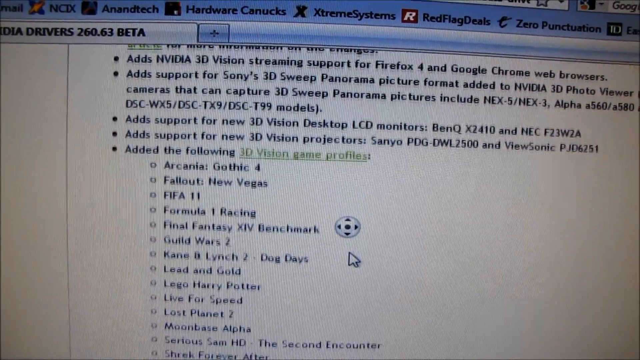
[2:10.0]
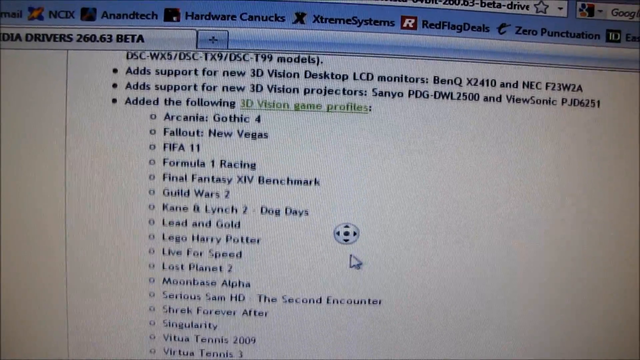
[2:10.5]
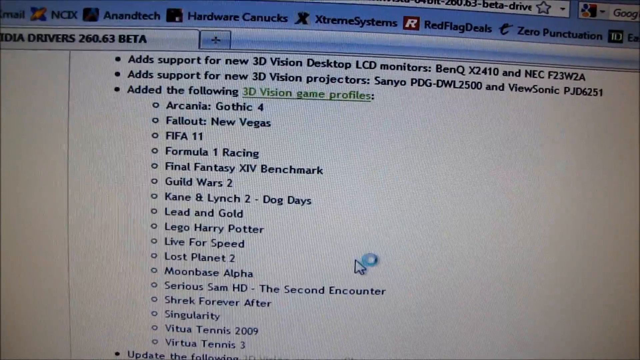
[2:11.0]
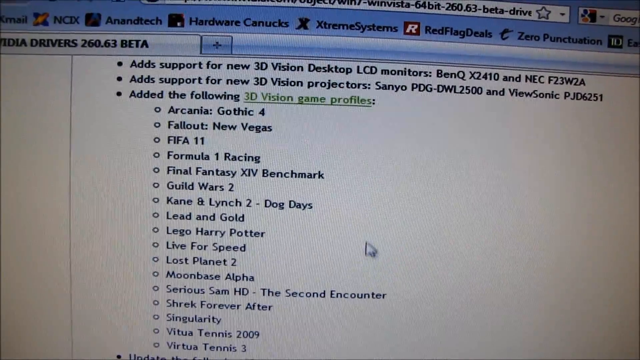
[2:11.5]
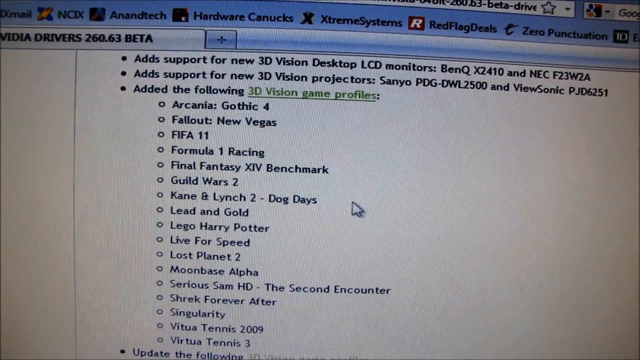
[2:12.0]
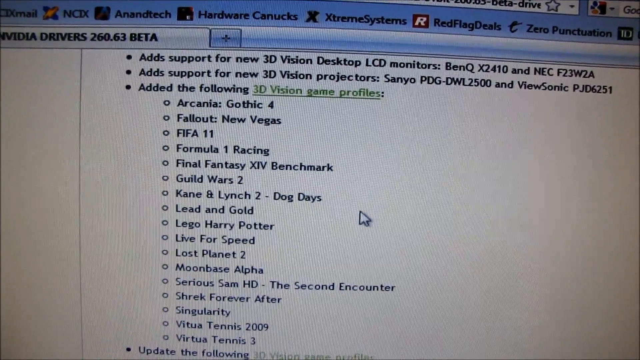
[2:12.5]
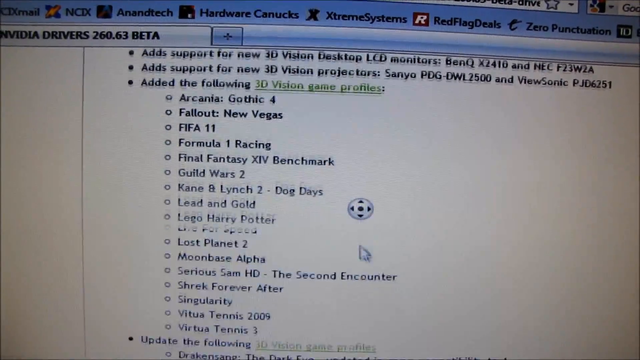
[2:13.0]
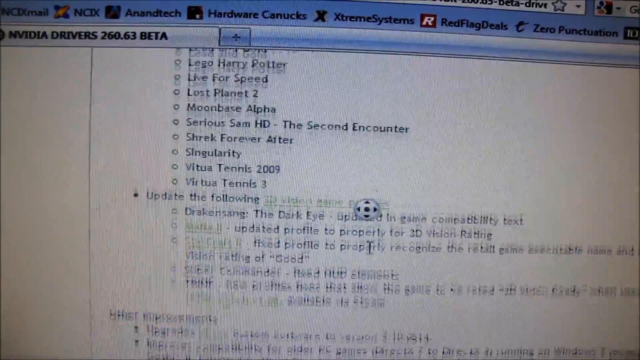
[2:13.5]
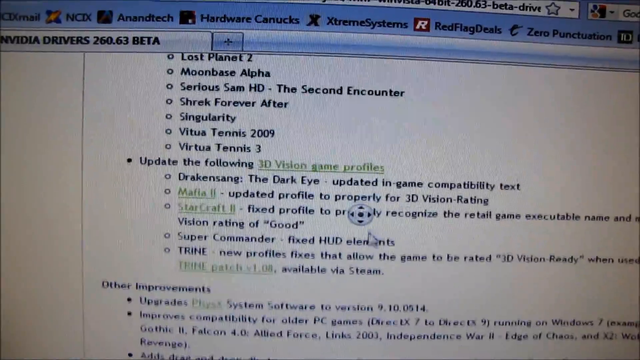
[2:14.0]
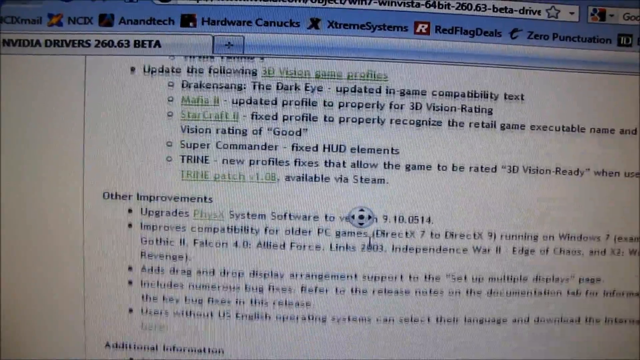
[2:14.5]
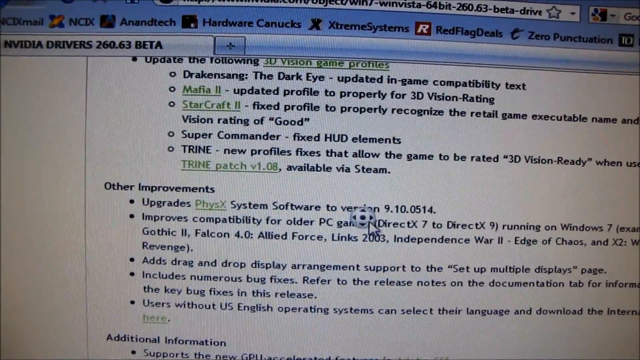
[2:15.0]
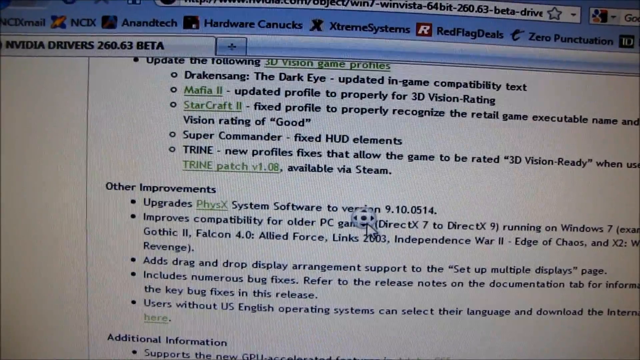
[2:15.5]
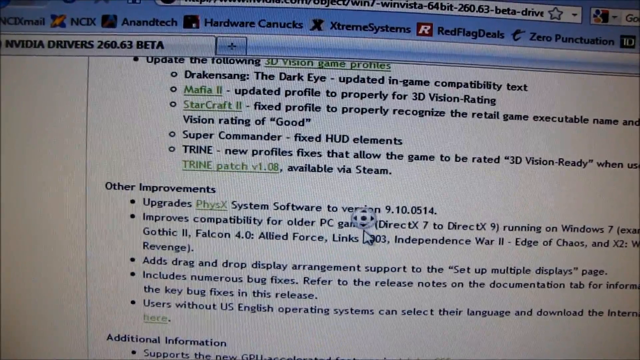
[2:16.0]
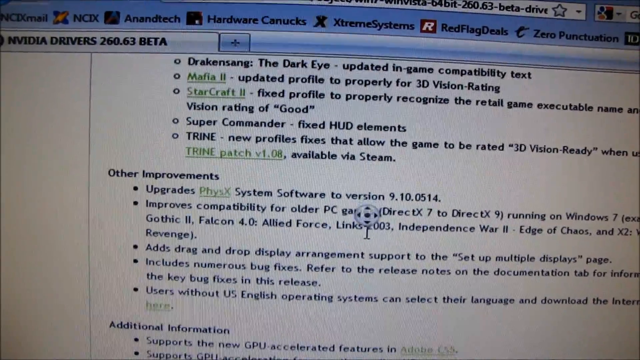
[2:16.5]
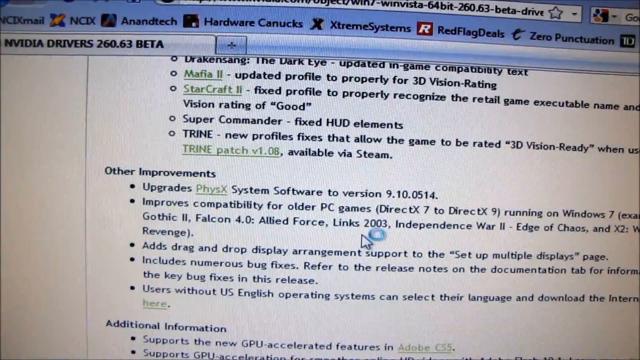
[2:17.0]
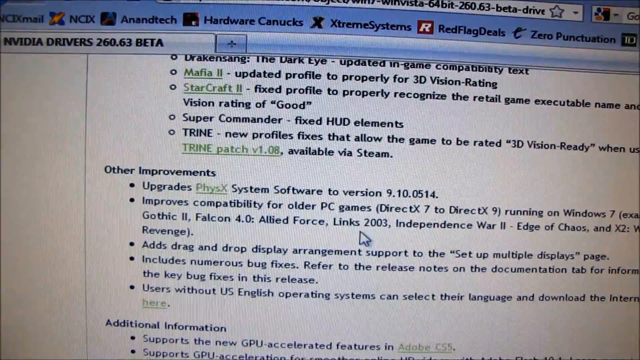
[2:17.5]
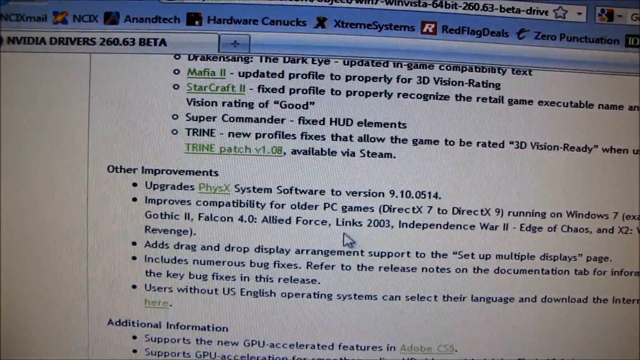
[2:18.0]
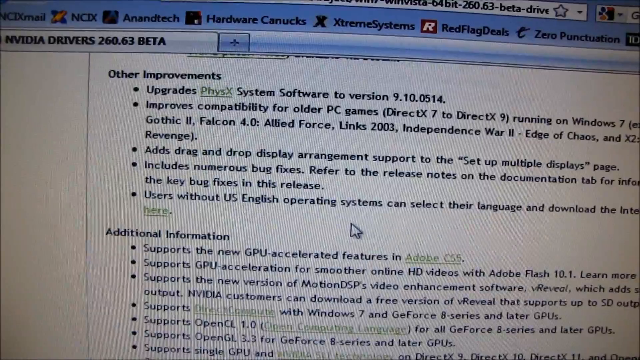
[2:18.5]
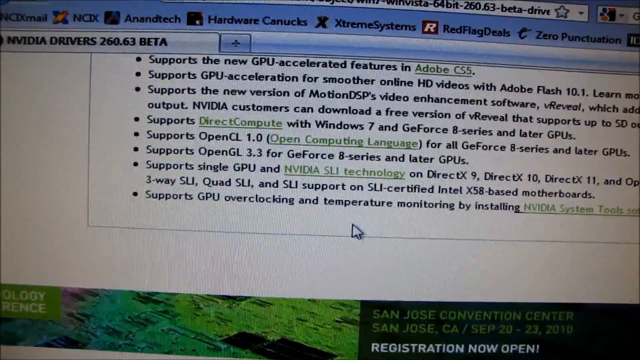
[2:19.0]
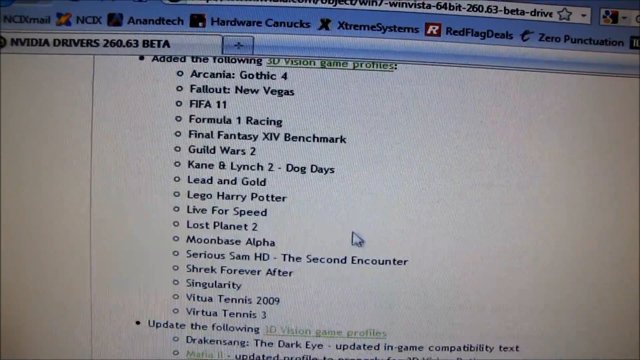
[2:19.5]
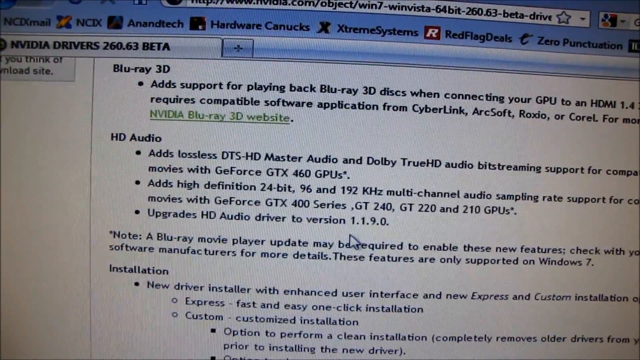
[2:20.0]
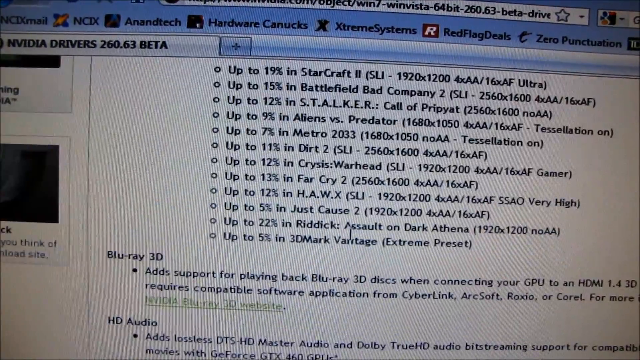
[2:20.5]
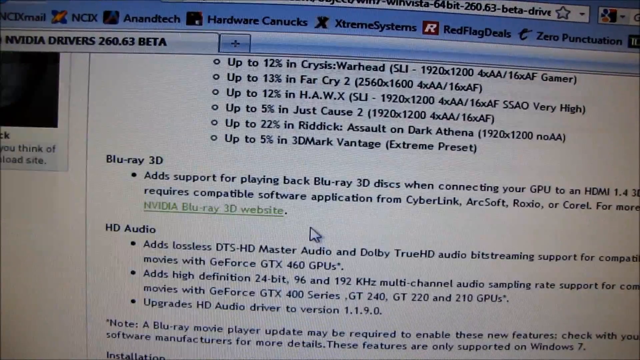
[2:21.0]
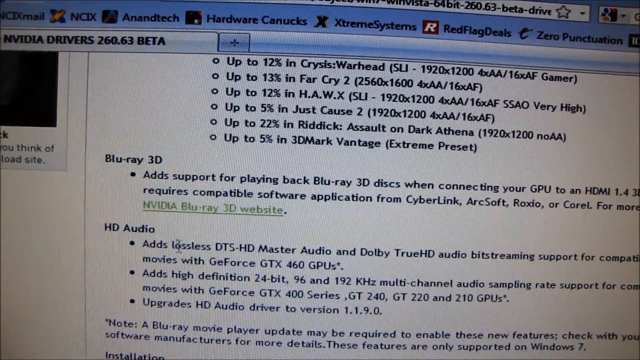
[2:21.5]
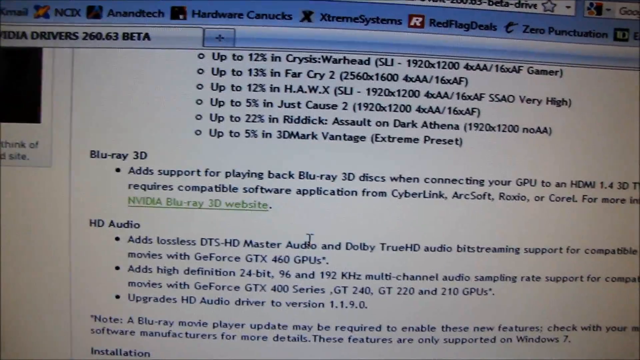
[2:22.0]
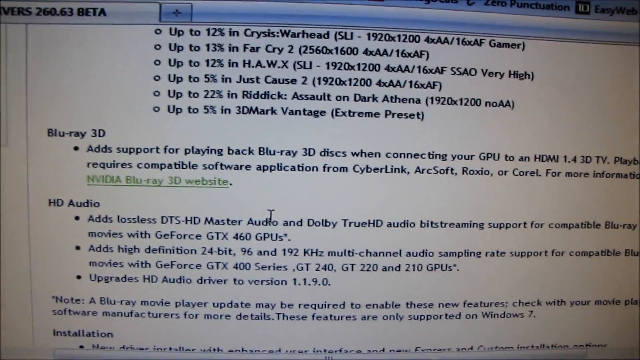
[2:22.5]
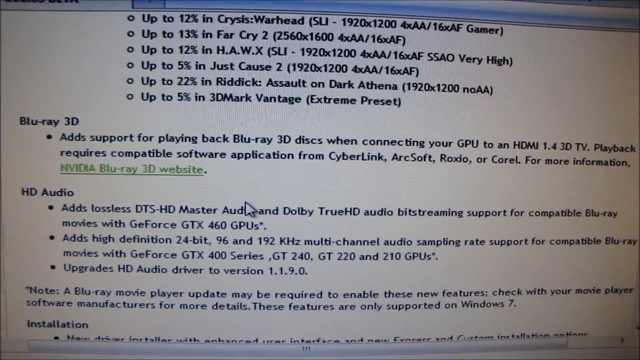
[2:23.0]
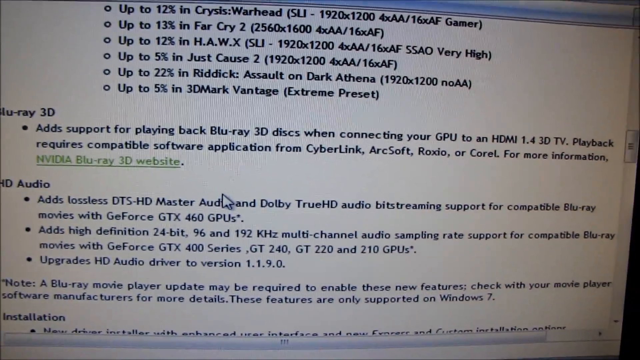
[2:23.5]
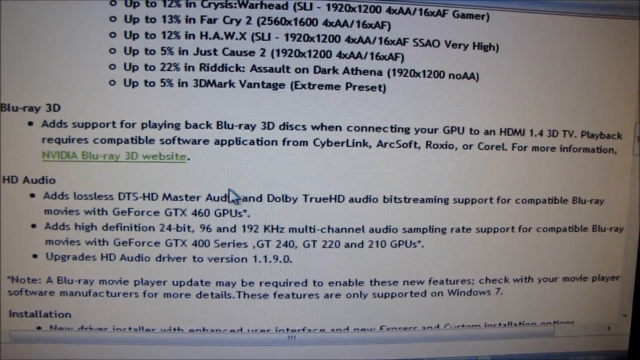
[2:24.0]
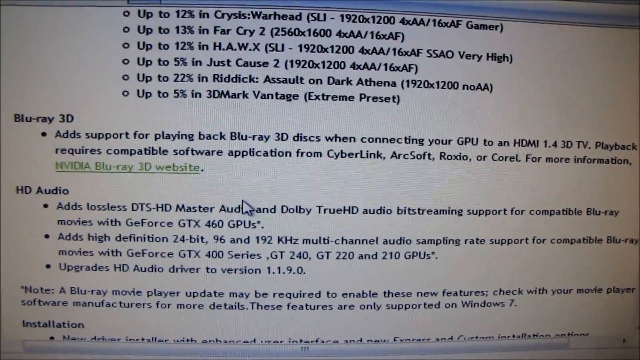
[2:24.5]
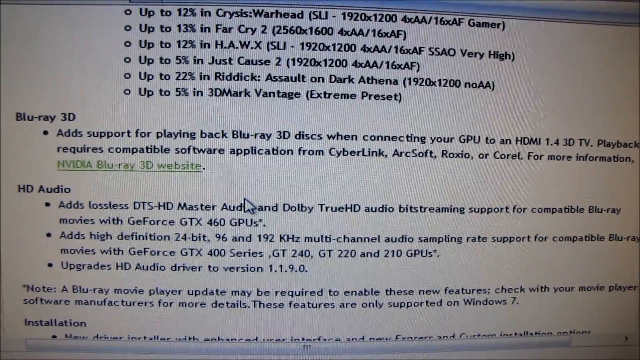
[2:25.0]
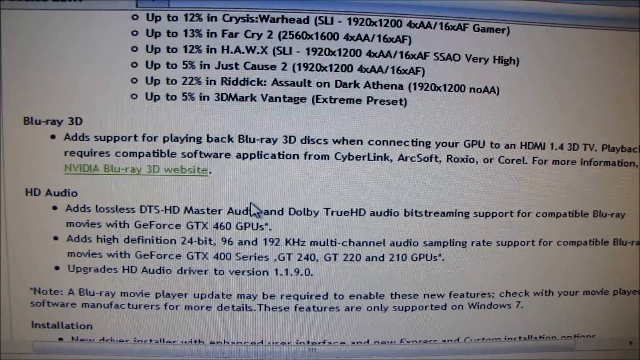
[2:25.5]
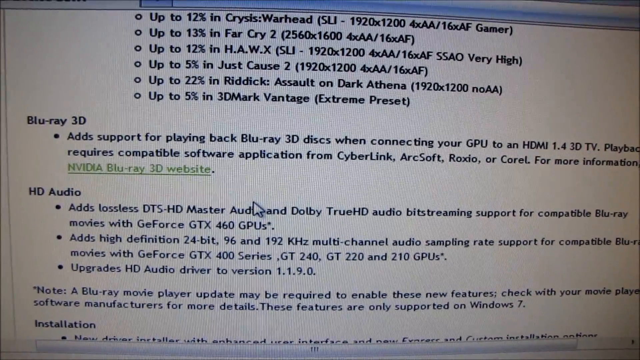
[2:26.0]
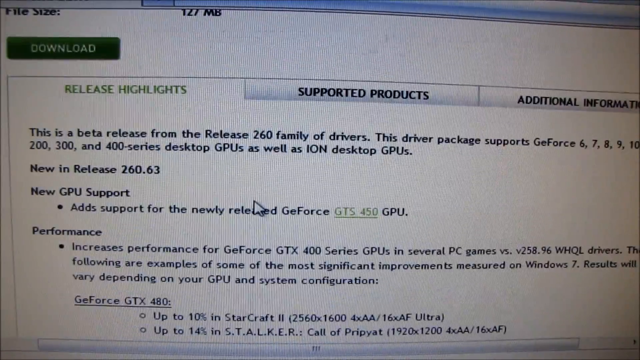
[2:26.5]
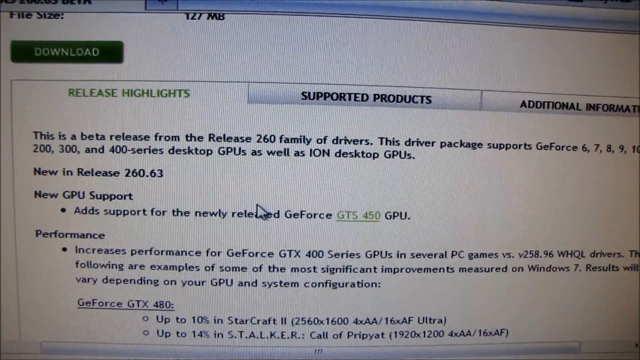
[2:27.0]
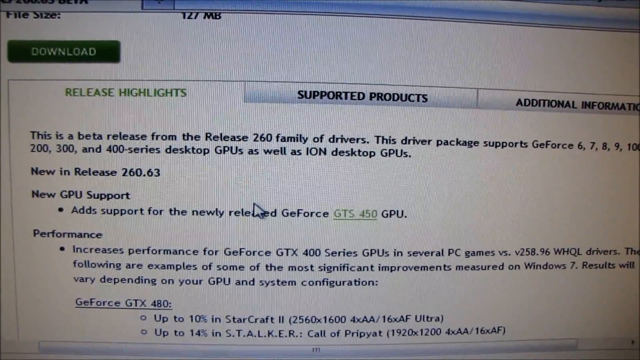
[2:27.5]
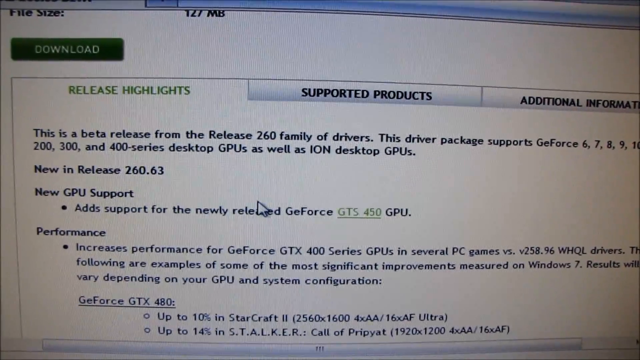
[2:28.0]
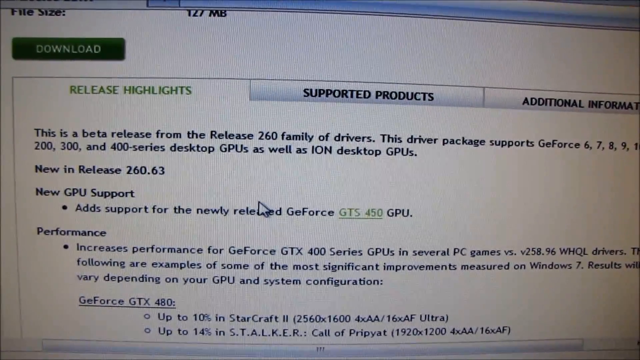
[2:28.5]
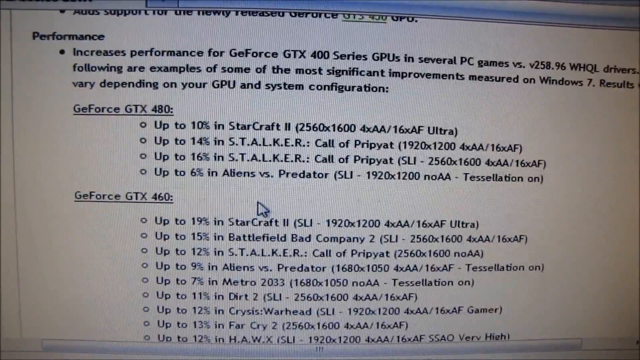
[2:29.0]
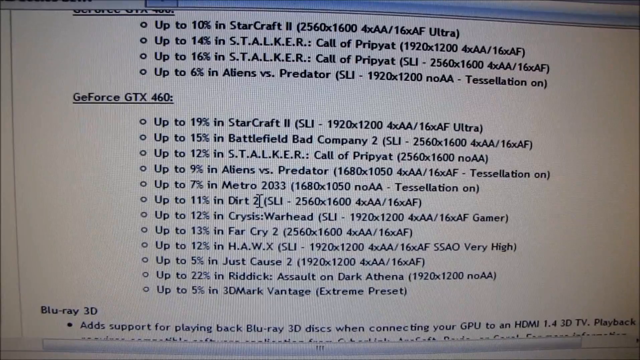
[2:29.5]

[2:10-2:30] The user scrolls down through the website. Very briefly, a window pops up that looks like a file transfer window, with files moving from one place to another in sort of an animated GIF, and it disappears almost immediately. As he keeps scrolling, another window flashes for an instant; it looks like a black window and is gone before it can be identified. He scrolls to the bottom, then quickly goes back up to the HD audio section and adjusts the camera, sort of centering the HD audio text in the shot. He pauses there for a bit, then appears to scroll quickly back up to the top, sort of scrolling back and forth. A blue circle repeatedly pops up next to the cursor, indicating the computer is busy.